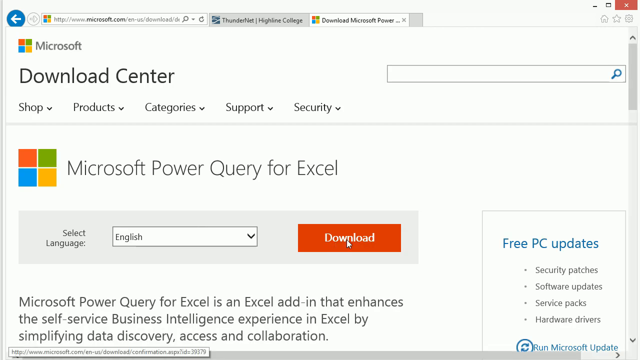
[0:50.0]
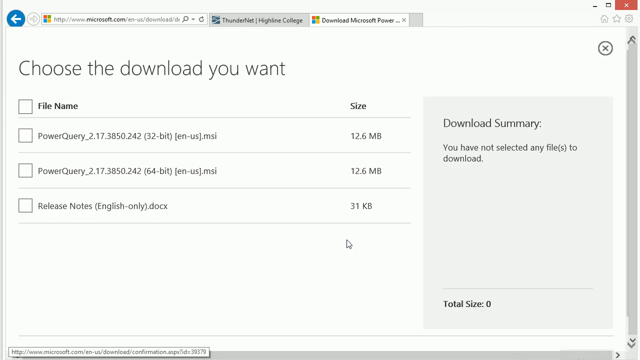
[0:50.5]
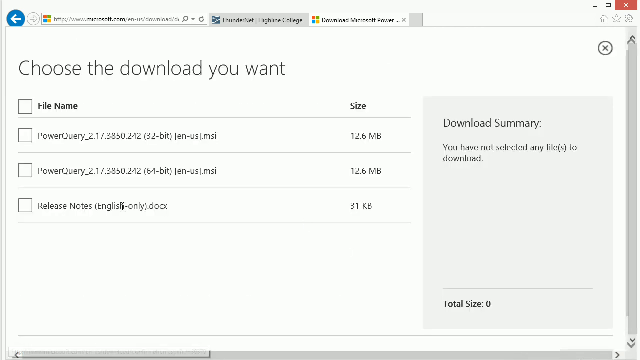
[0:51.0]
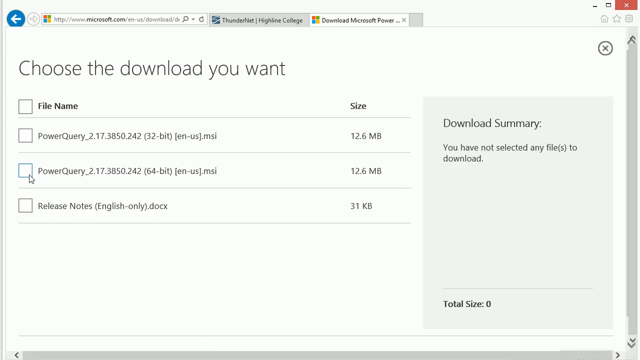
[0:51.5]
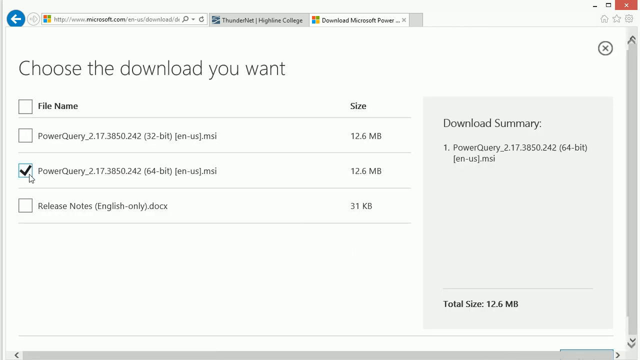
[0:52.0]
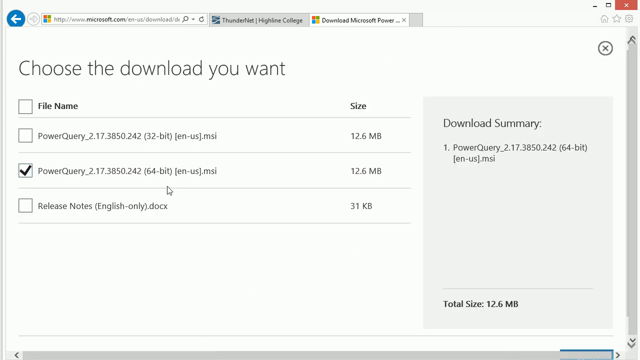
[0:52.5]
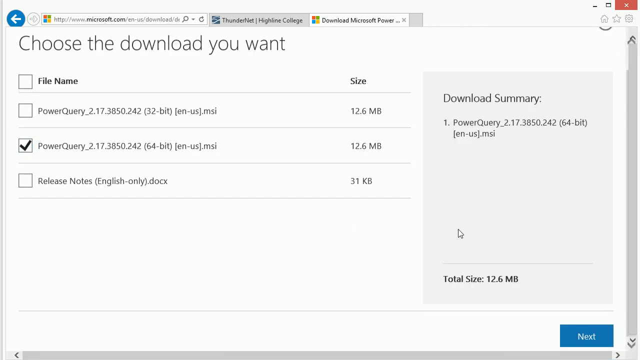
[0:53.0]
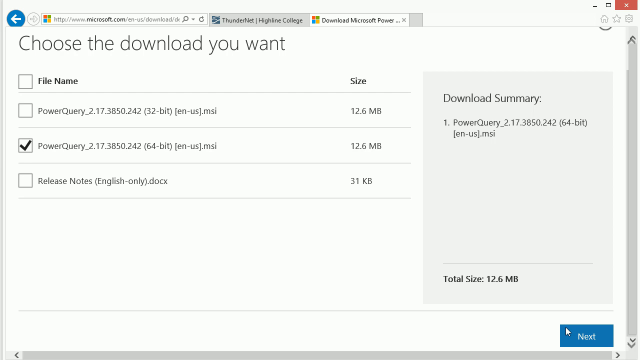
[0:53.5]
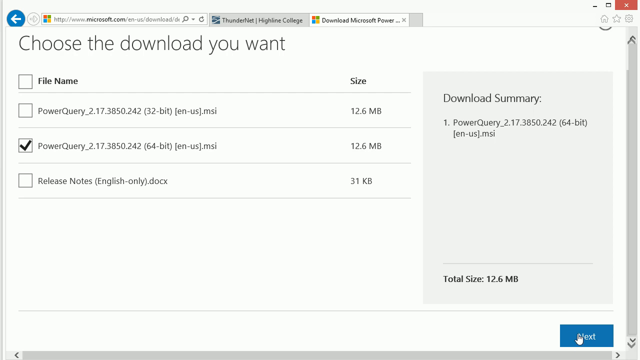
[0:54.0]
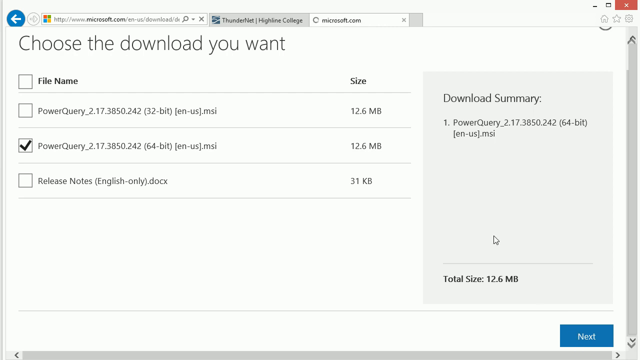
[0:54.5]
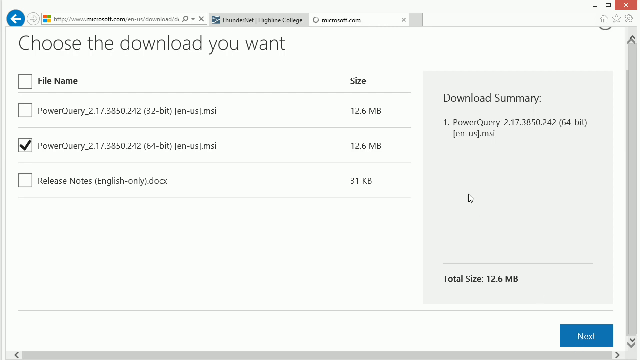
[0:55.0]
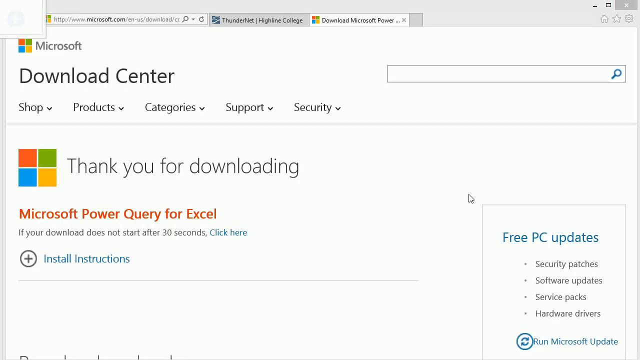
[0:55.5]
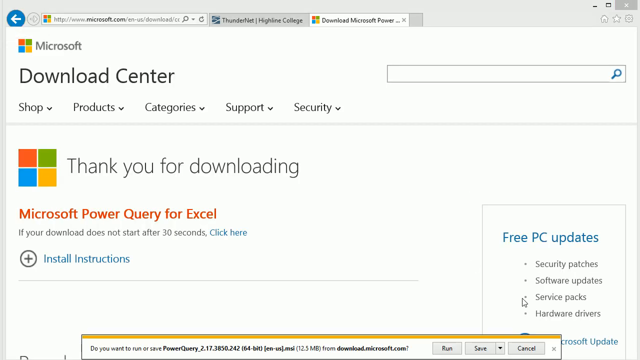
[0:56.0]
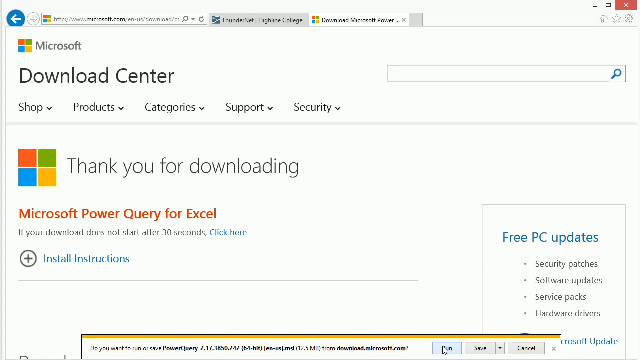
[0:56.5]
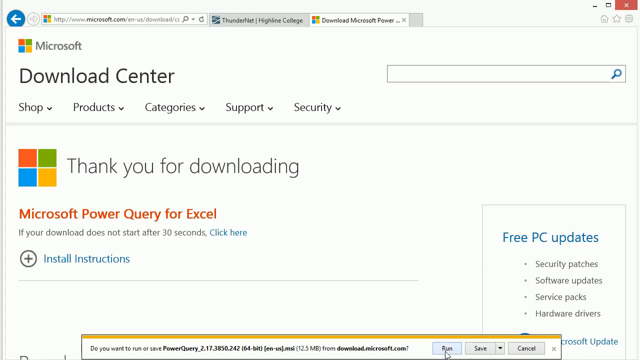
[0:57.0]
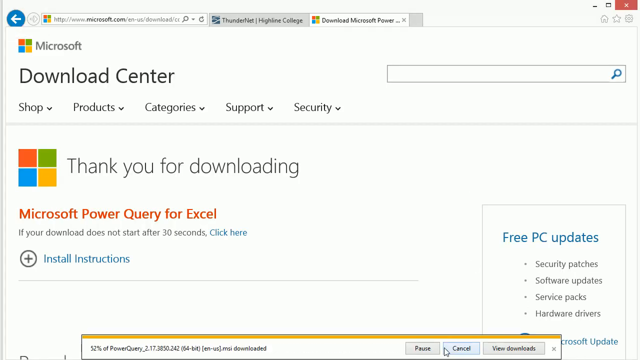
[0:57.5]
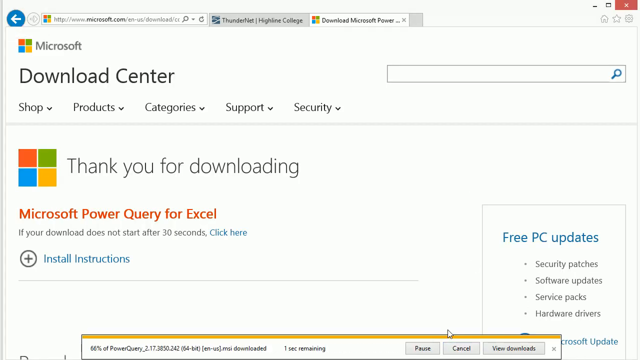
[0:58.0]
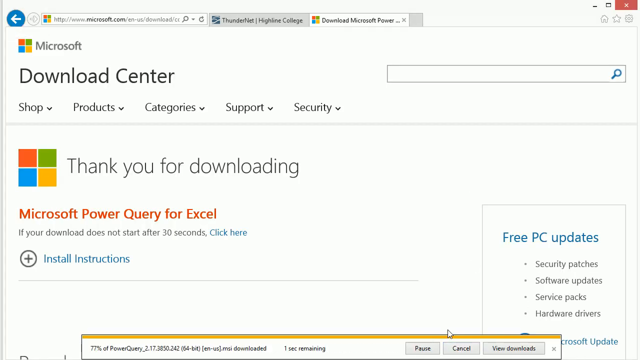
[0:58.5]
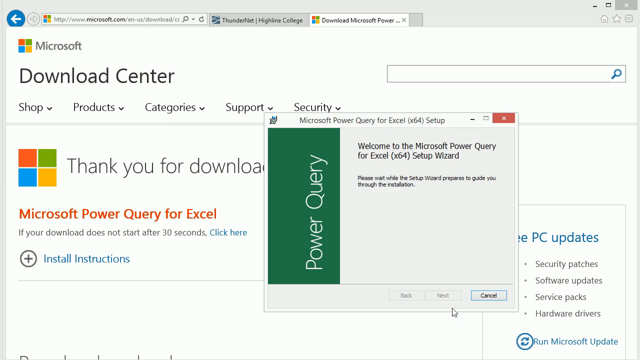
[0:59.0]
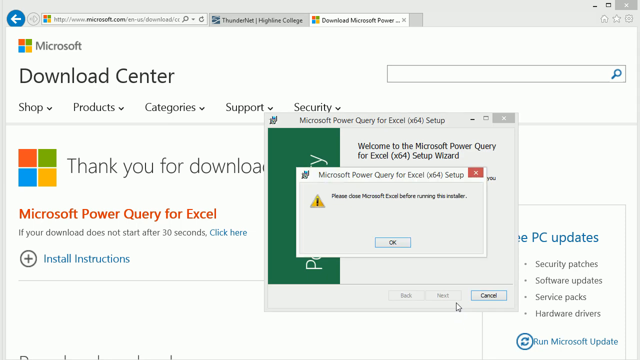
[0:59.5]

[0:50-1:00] On the Power Query web page, he clicks to download the summary of Power Query, which opens a new tab reading "choose the download you want," with file name and size columns. The first file is "Power Query_2.17.3850.242 32-bit English us.msi" at 12.6 megabytes; the second is a Power Query_2.17.3850.242 64-bit English us.msi file, also 12.6 megabytes; the third reads "release notes, English only," a docx file of 31 kilobytes. He selects only the second file and hits Next, which brings up a page reading "thank you for downloading Microsoft Power Query for Excel."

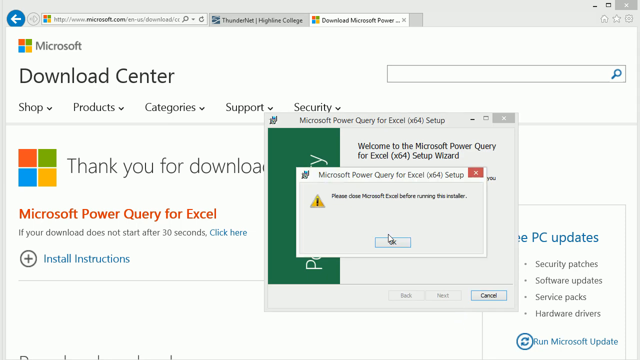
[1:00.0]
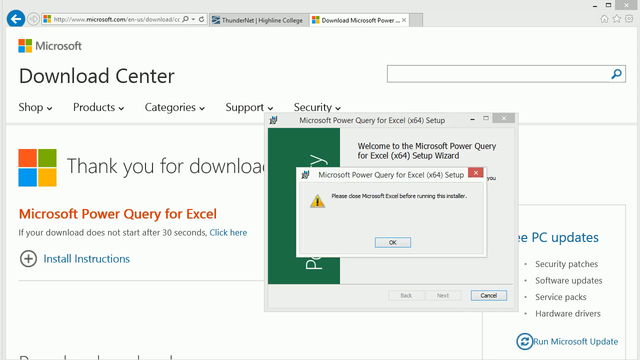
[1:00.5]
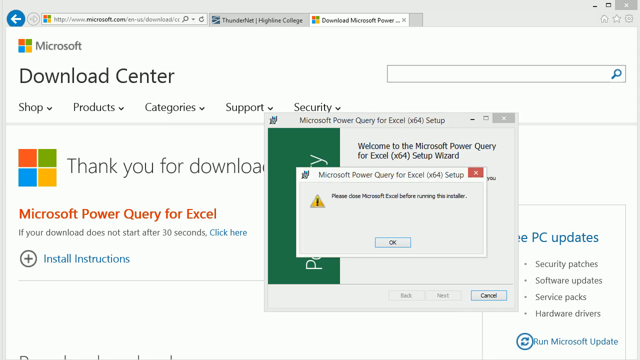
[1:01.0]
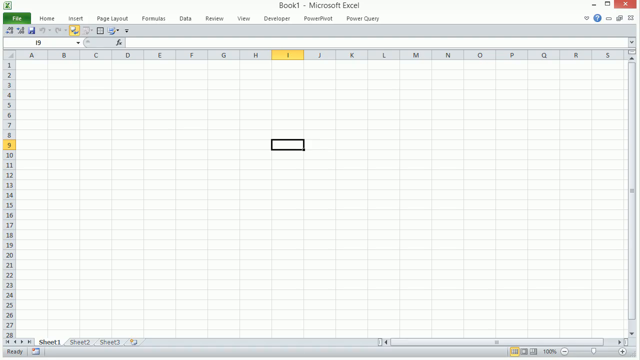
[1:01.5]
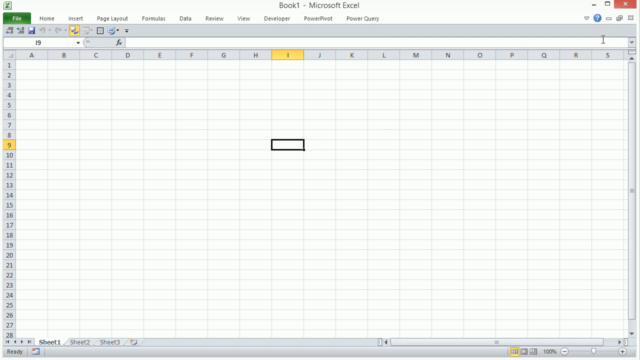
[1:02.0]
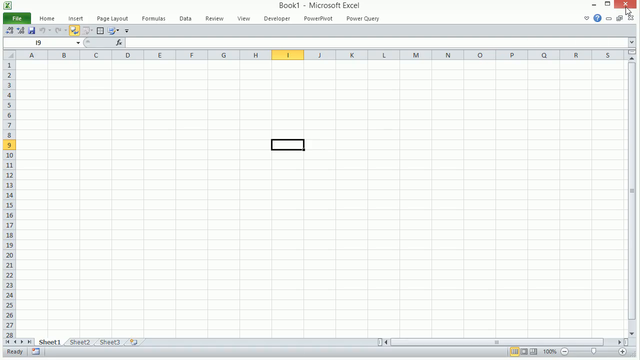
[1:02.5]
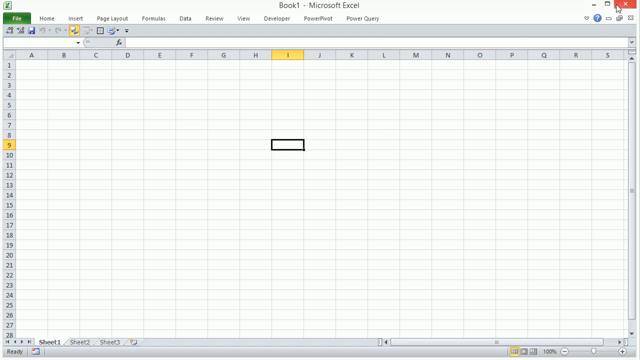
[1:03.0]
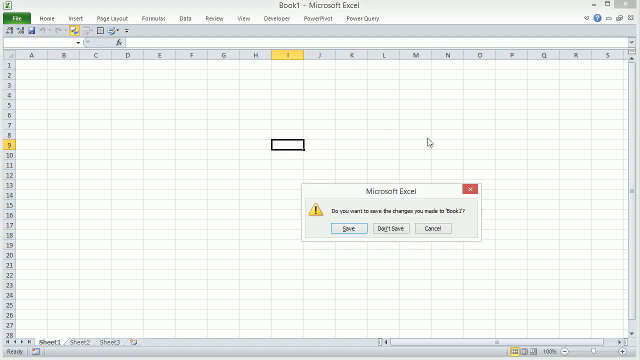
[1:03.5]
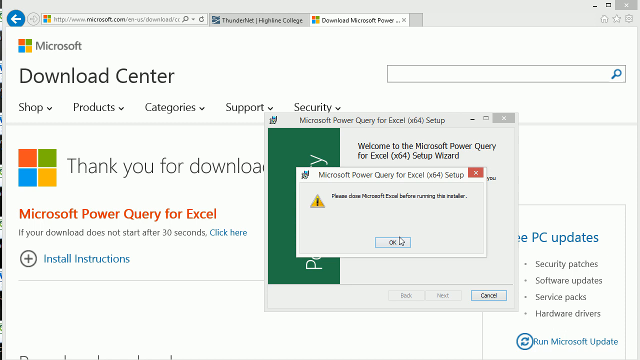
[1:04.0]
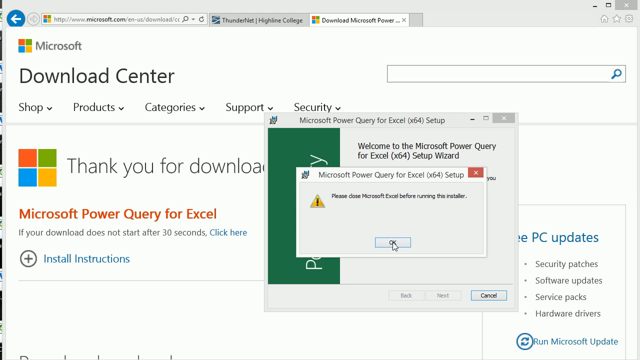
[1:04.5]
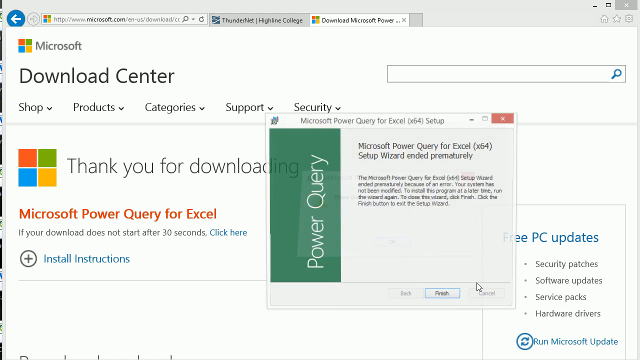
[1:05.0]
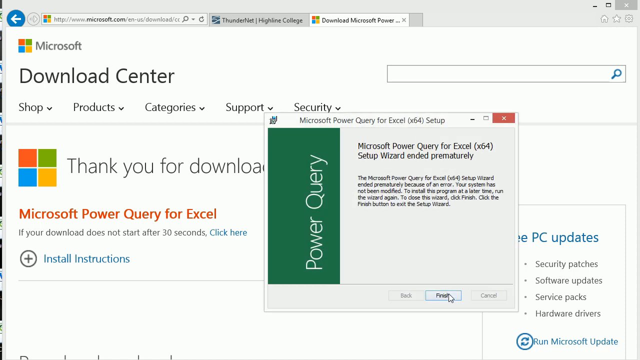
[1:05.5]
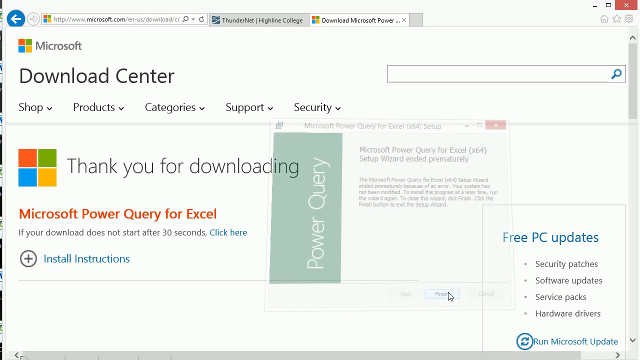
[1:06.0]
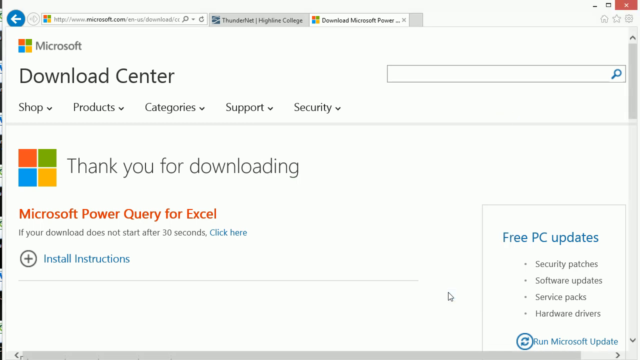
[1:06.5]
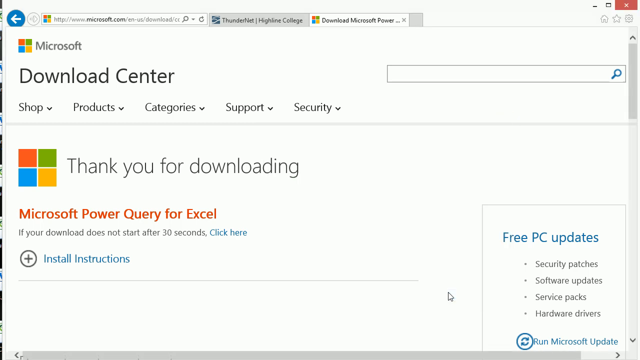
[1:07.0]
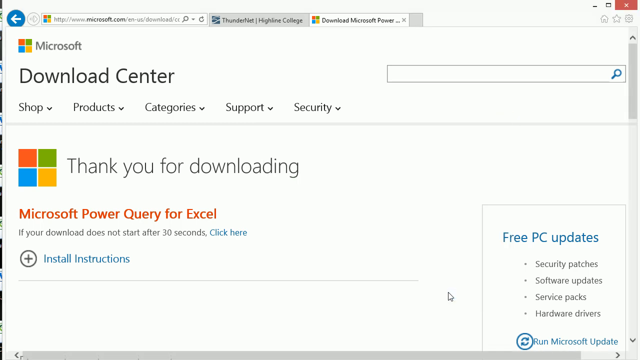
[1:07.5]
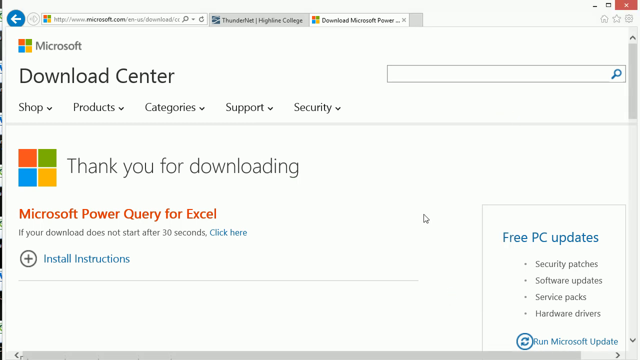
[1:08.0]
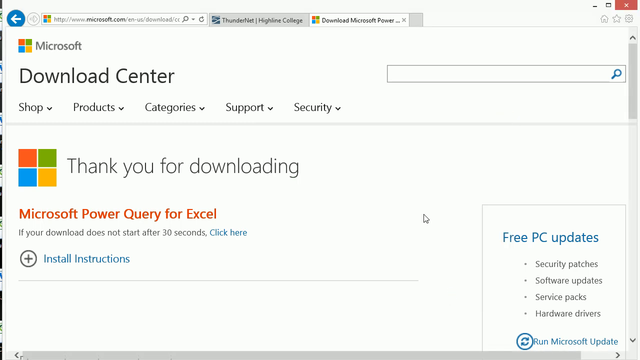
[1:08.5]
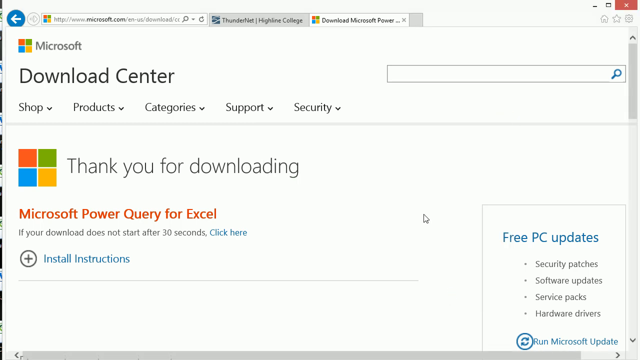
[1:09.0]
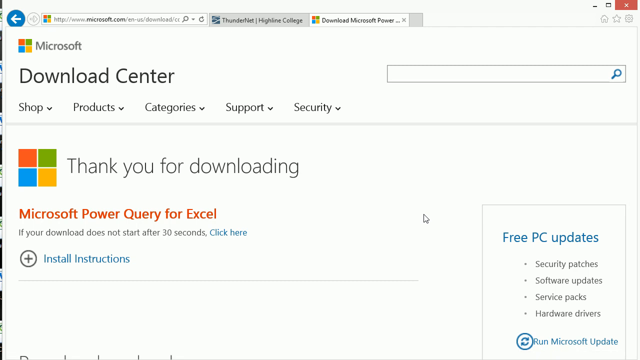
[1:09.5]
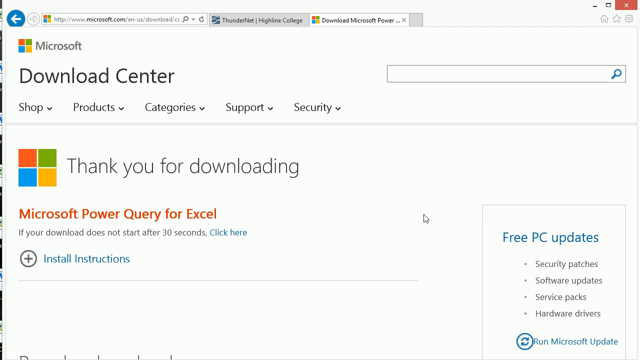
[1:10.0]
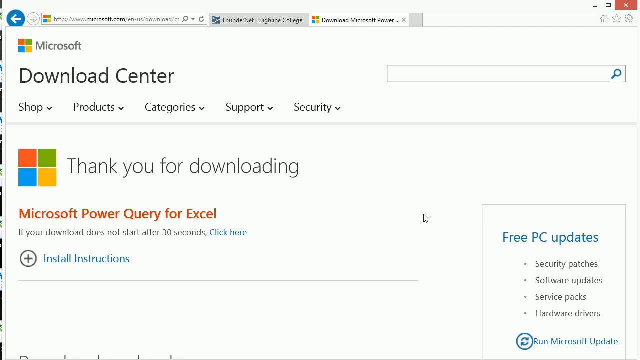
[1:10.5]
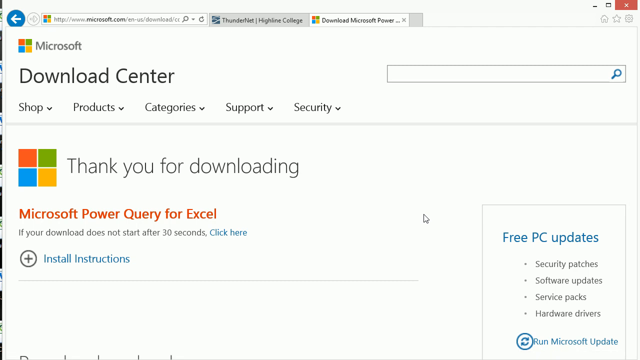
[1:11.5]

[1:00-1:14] After the second file downloads, a pop-up appears welcoming him to the Microsoft Power Query for Excel setup wizard and saying "please close Microsoft Excel before running the installer." He goes back and closes his Microsoft Excel page, after which the pop-up reads "Setup Wizard ended prematurely." He hits Finish and is returned to the "thank you for downloading" page on the Microsoft Download Center.